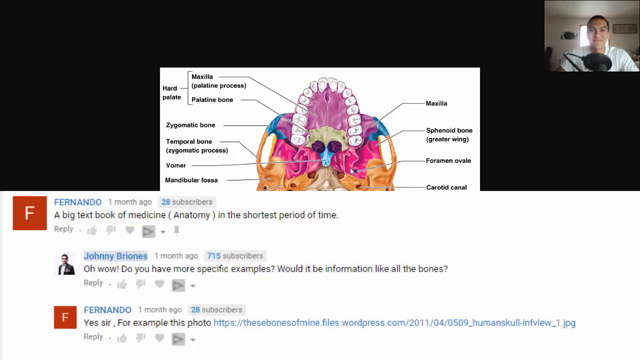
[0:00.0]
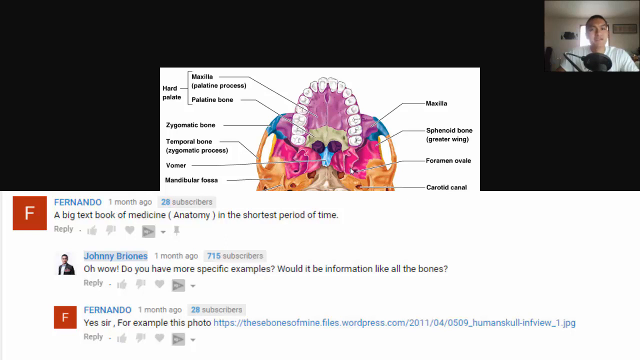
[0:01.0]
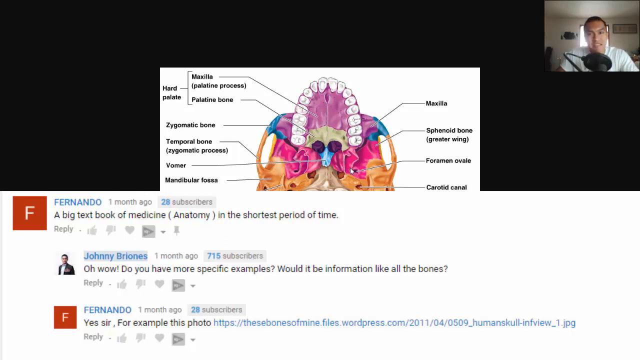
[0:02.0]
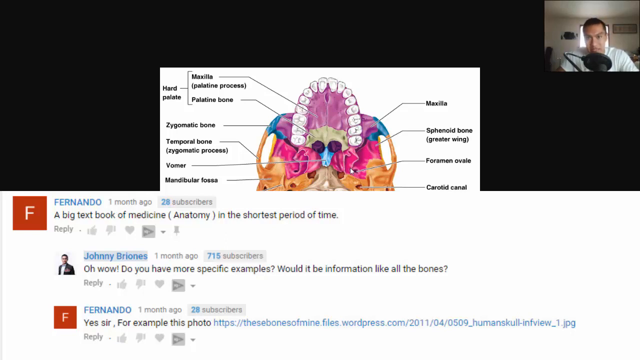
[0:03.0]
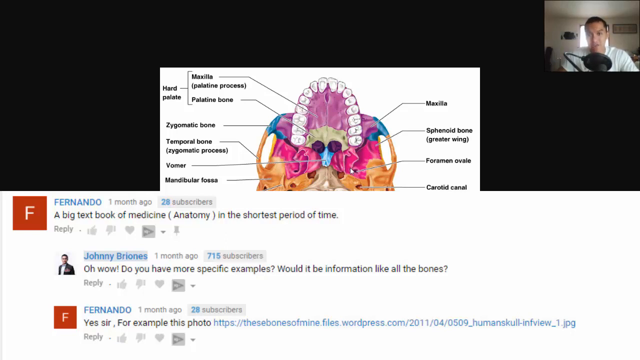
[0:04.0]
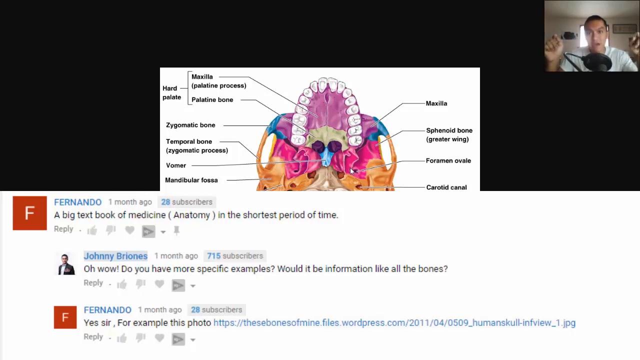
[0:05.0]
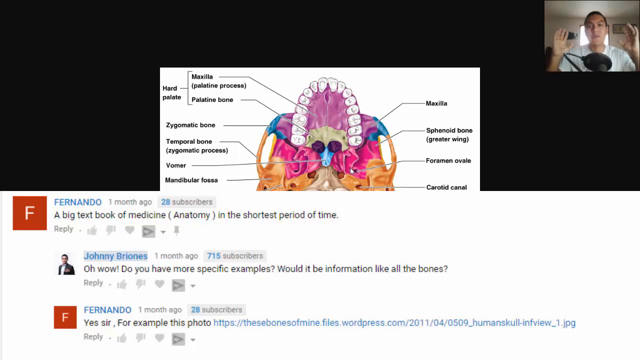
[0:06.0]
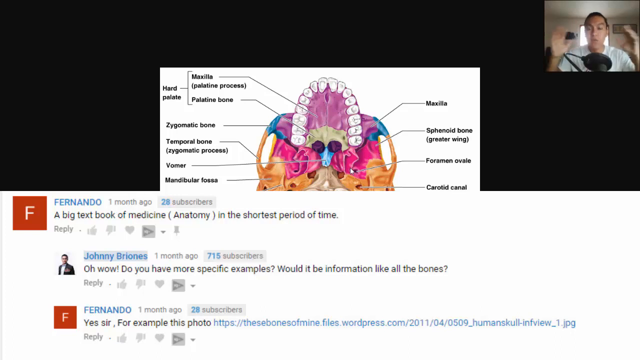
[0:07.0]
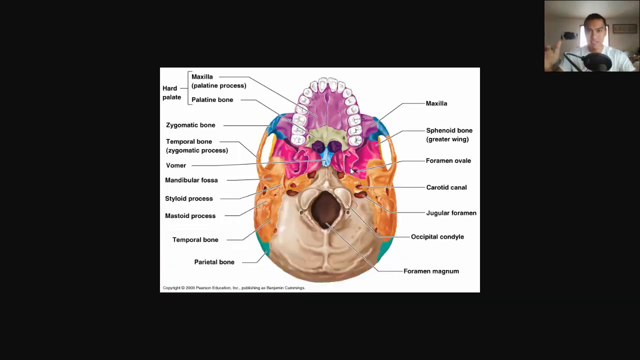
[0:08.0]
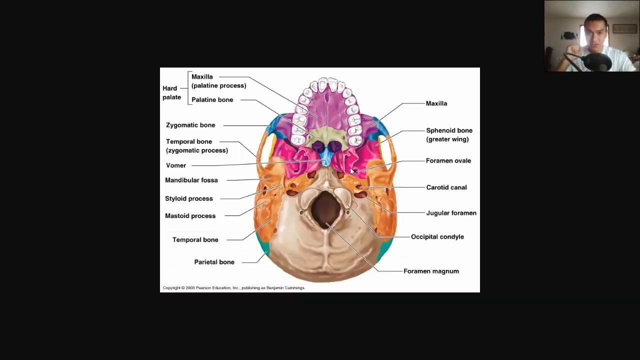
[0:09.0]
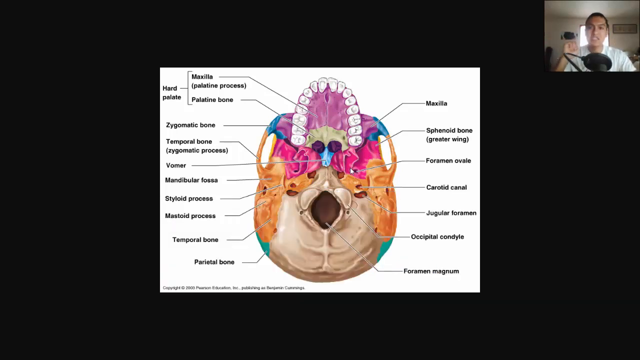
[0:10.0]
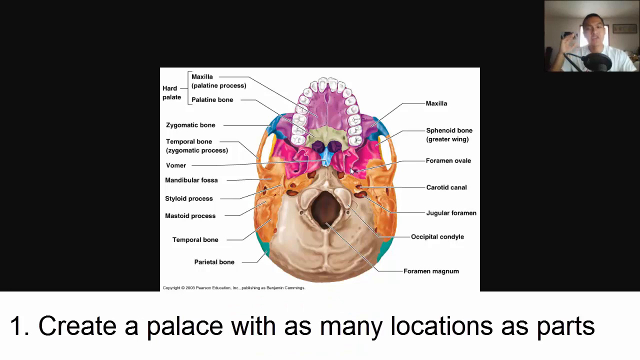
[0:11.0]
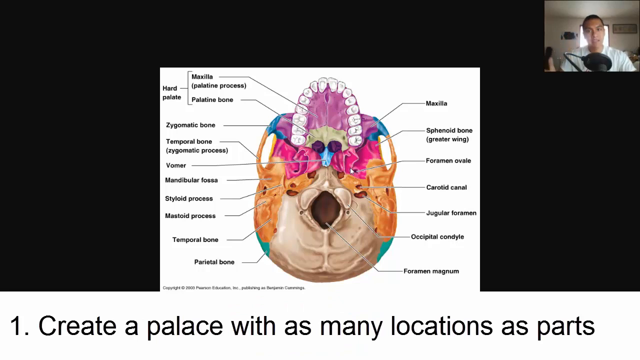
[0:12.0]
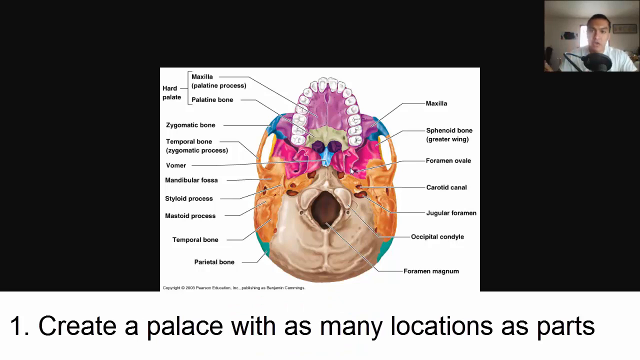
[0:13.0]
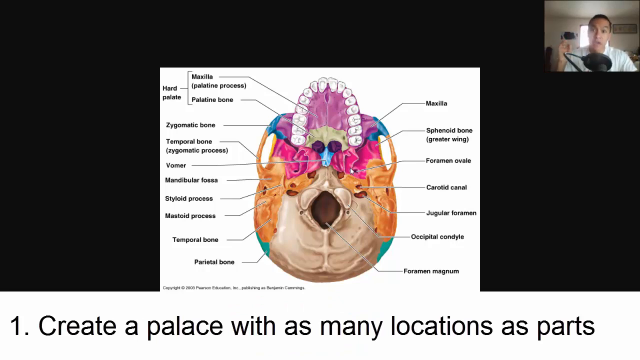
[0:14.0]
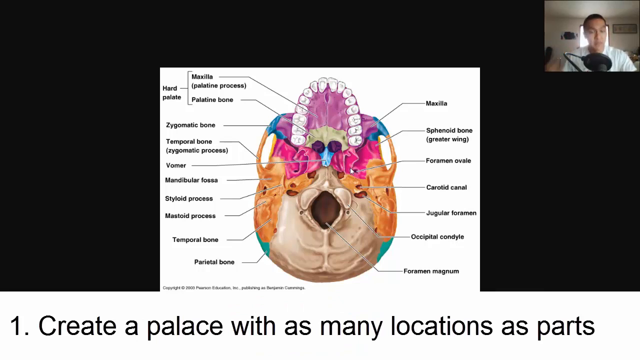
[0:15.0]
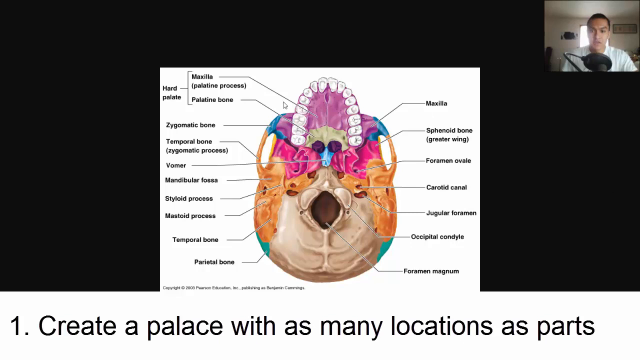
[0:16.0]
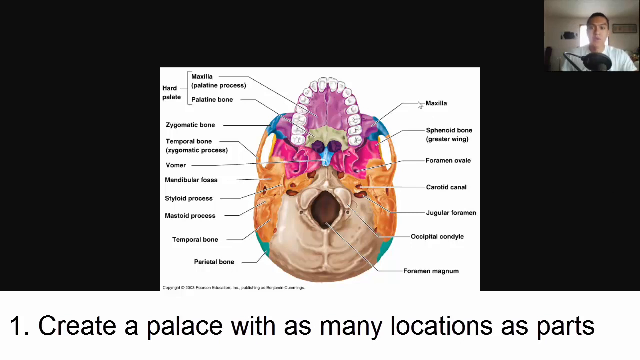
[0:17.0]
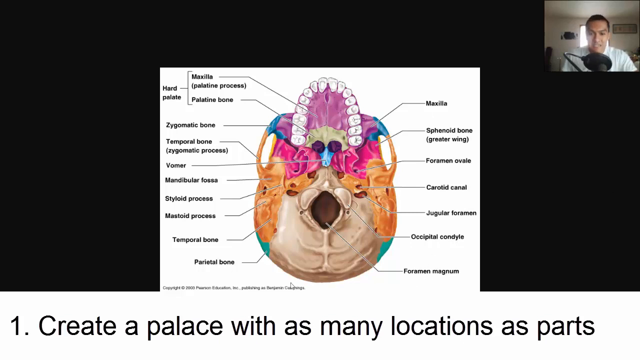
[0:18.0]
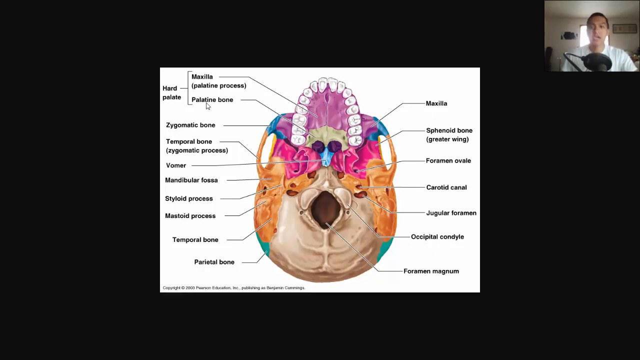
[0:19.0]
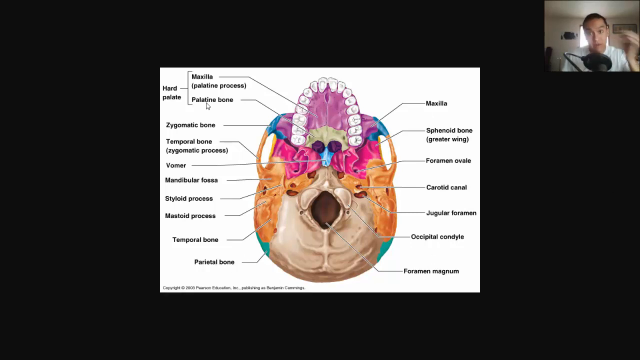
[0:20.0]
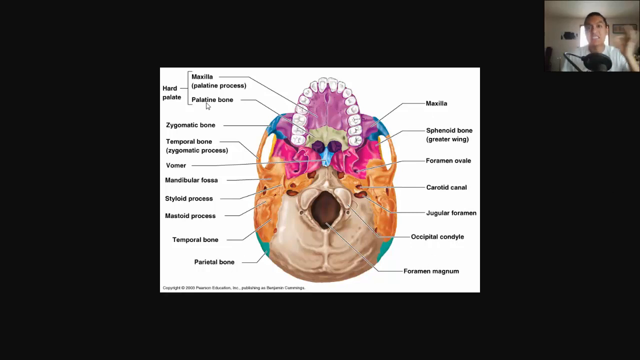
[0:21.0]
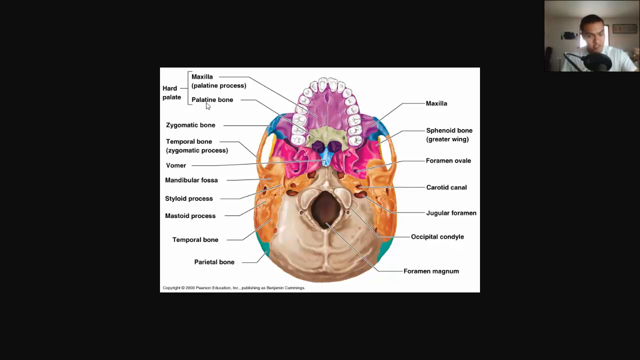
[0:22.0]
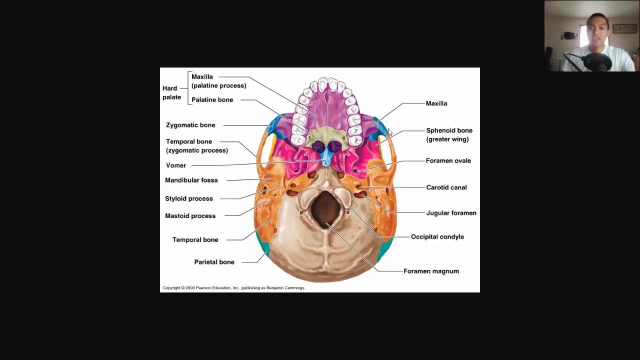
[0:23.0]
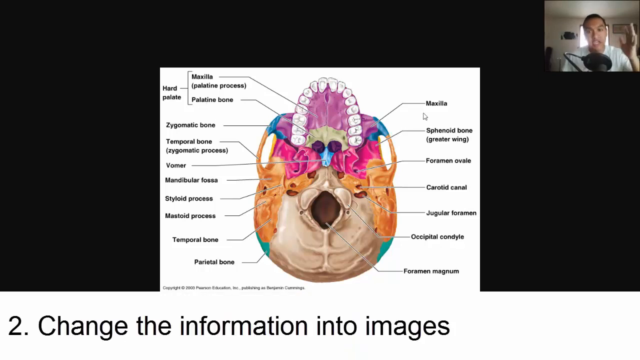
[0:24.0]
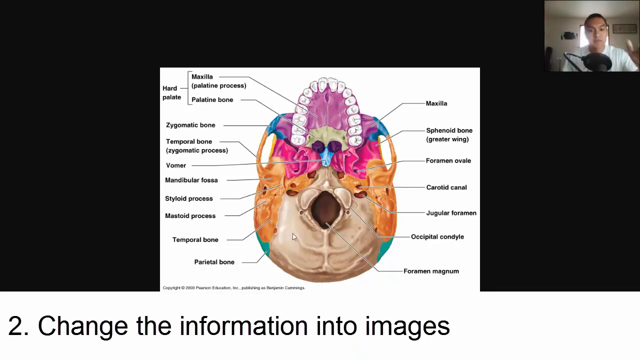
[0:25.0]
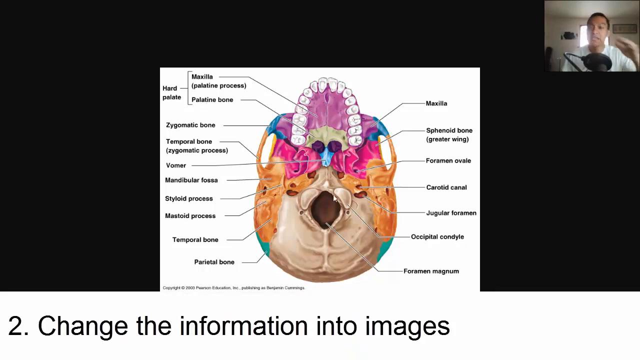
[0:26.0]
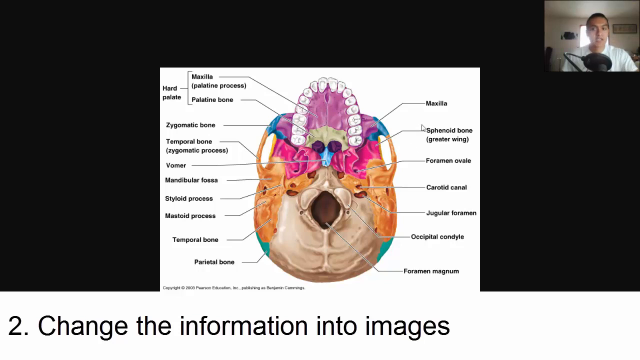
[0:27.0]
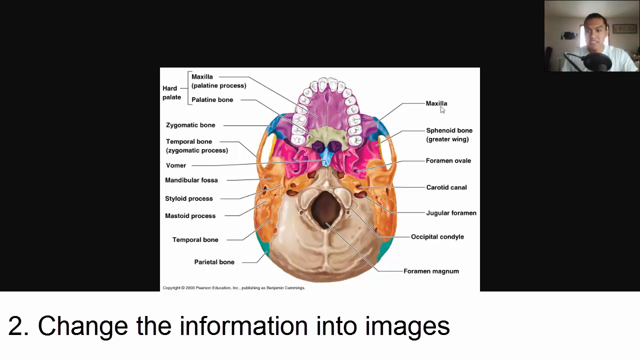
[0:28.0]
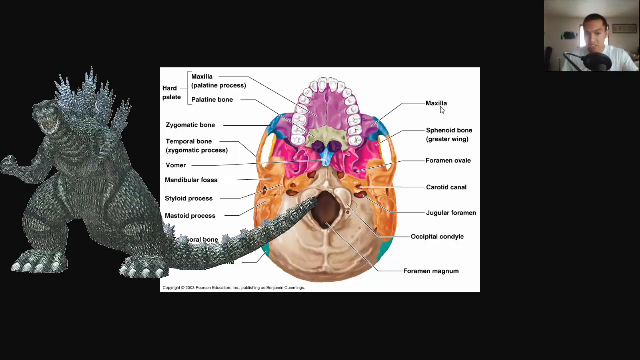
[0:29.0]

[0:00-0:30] What looks to be someone talking over some sort of comment section fills the video. A man in the top right talks actively, and video of him is visible there. At the bottom are comments between two people named Fernando and Johnny Briones. The first comment says "a big textbook of medicine and anatomy in the shortest period of time." The second, from Johnny Briones, says "oh wow, do you have more specific examples? Would it be information like all the bones?" The last comment, from Fernando again, says "yes sir, for example this photo" and has a link to the photo, apparently the photo he is looking at. Below that, text says "number one, create a palace with as many locations as parts," and then number two says "change the information into images," seemingly tips on remembering parts of the human body. A picture of Godzilla flashes up on the left.